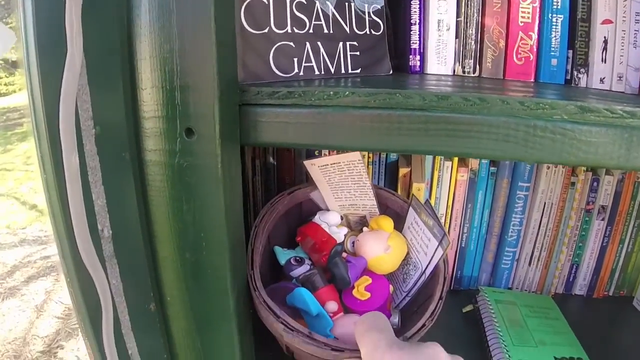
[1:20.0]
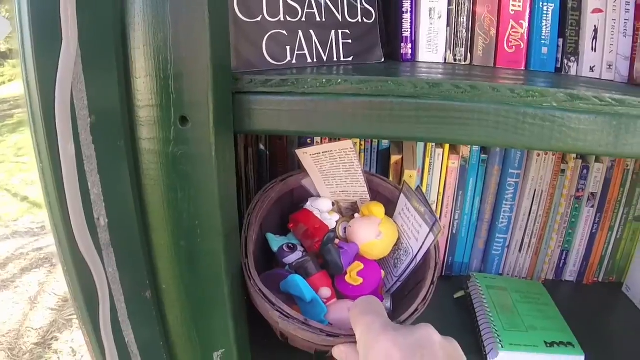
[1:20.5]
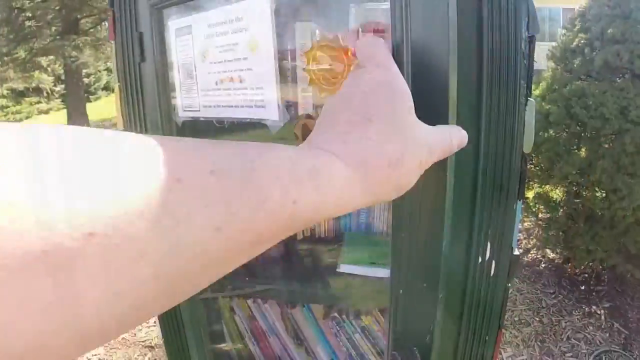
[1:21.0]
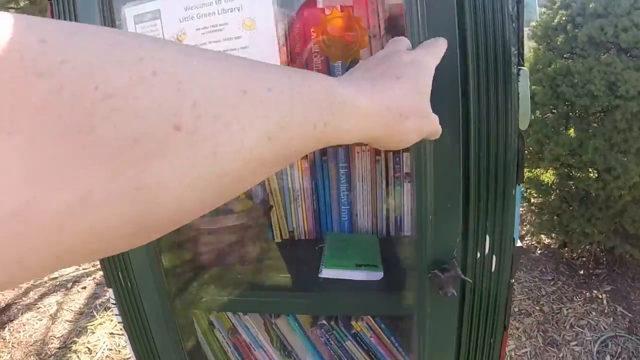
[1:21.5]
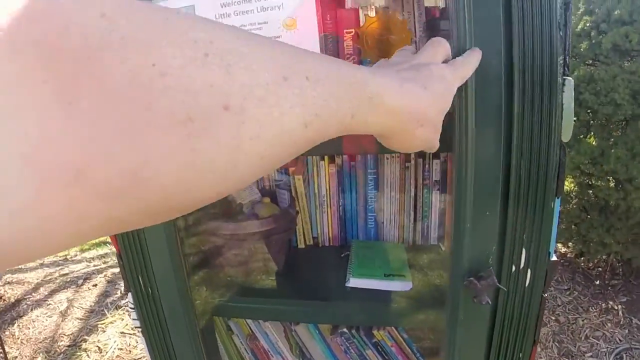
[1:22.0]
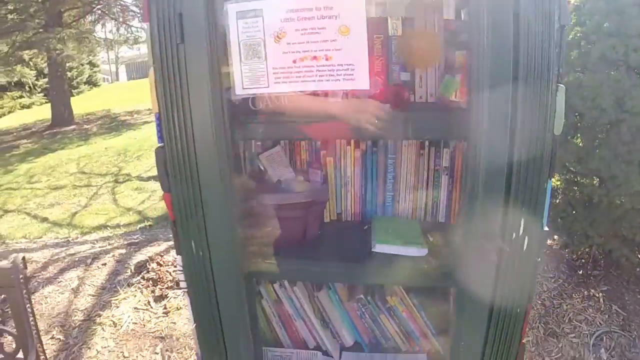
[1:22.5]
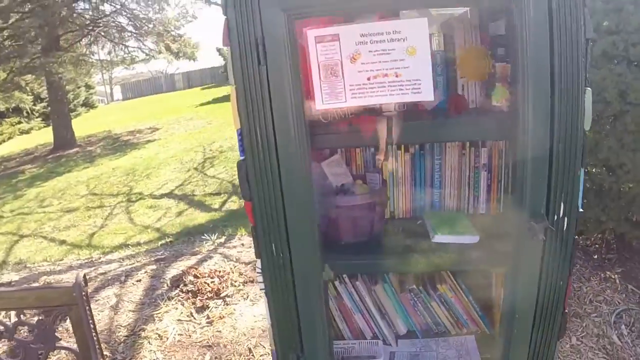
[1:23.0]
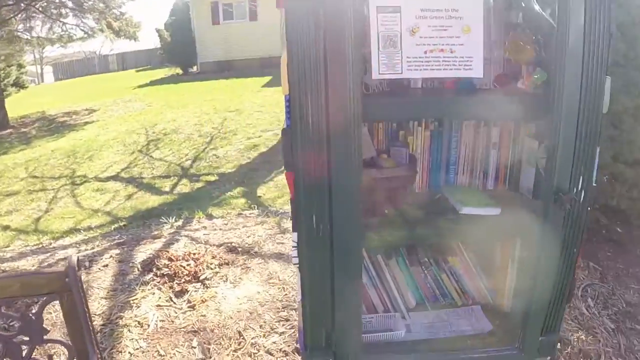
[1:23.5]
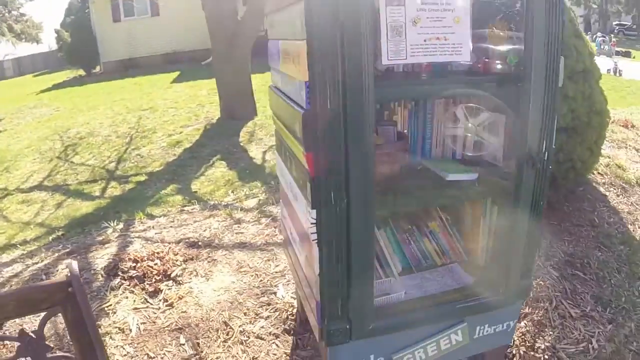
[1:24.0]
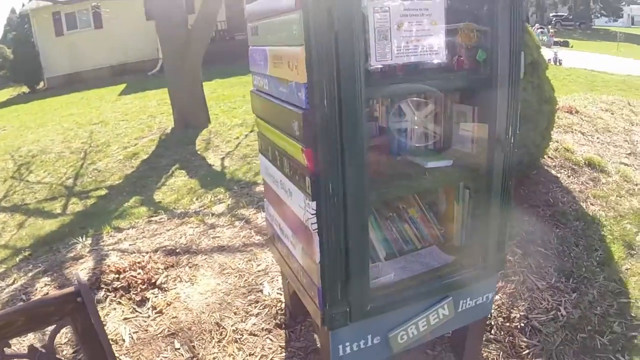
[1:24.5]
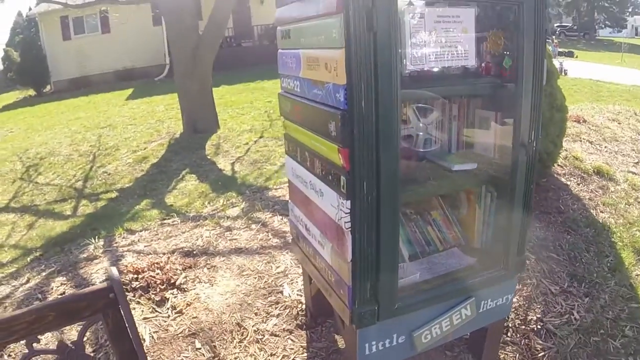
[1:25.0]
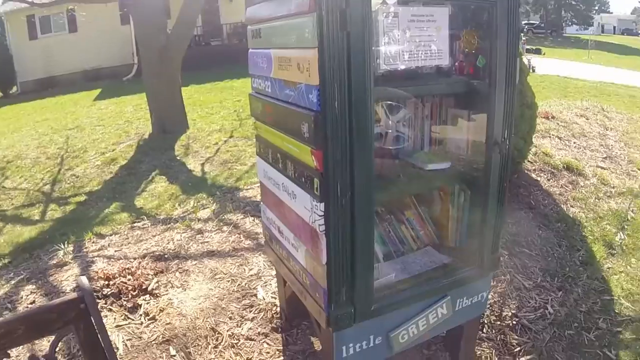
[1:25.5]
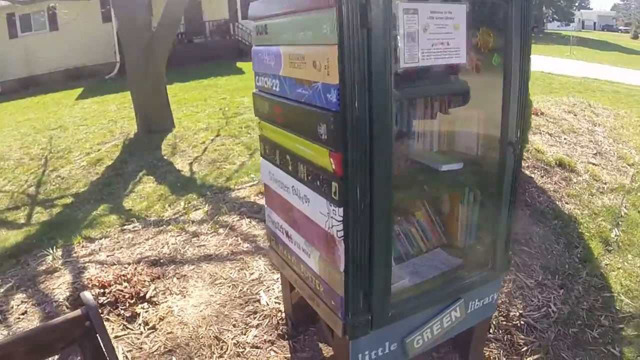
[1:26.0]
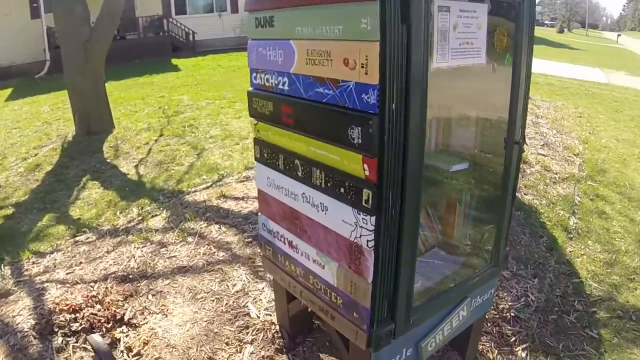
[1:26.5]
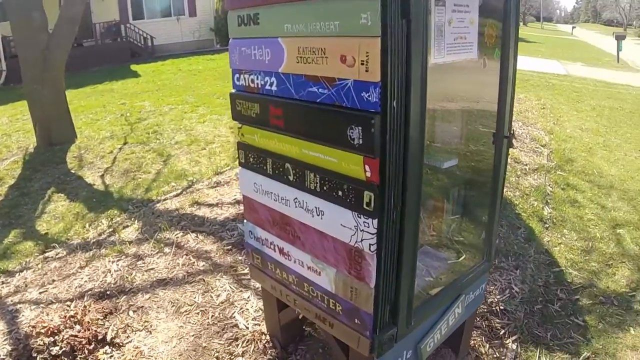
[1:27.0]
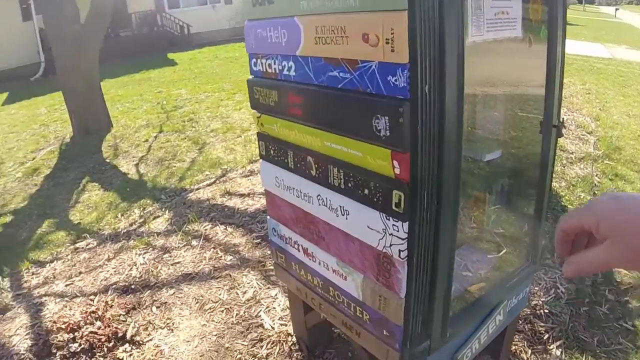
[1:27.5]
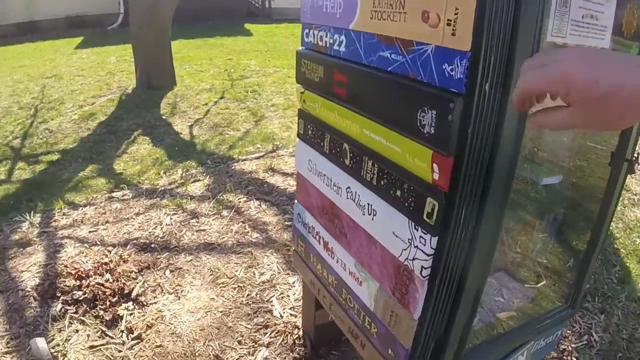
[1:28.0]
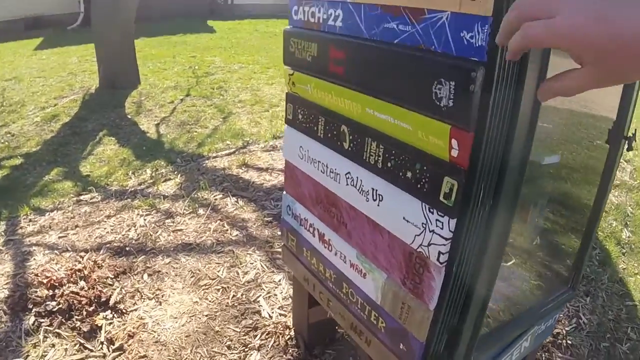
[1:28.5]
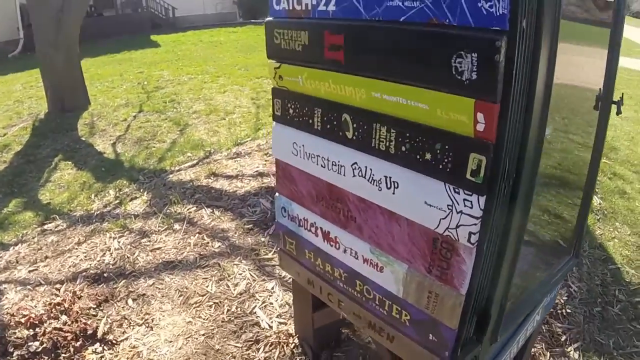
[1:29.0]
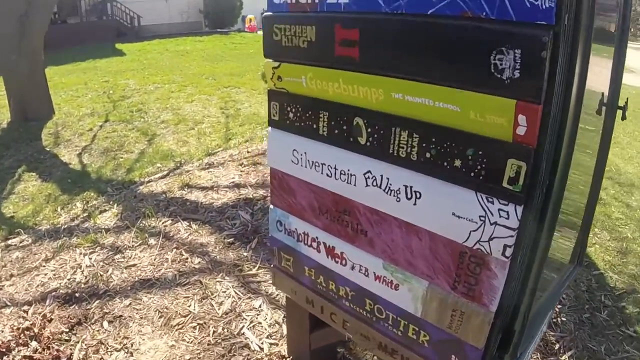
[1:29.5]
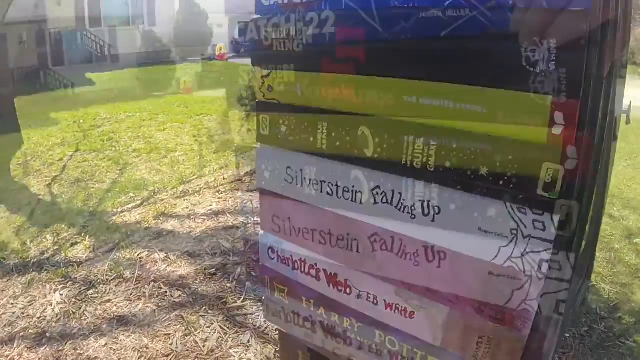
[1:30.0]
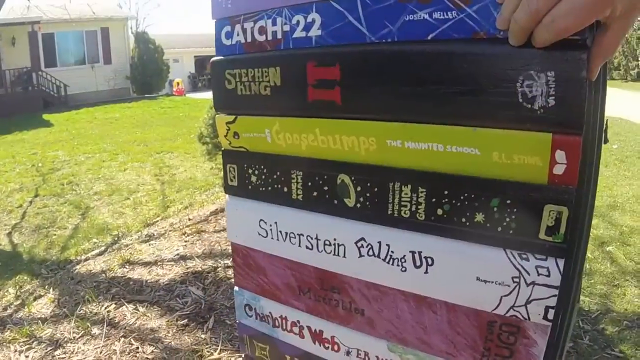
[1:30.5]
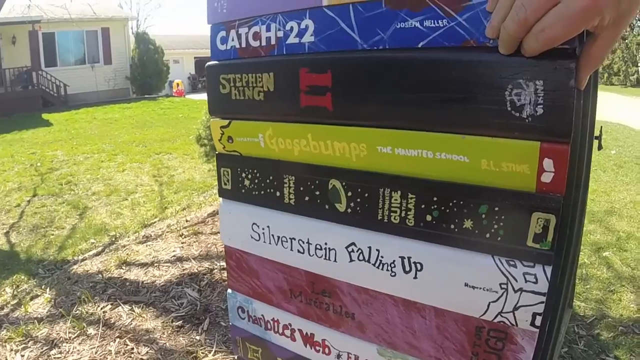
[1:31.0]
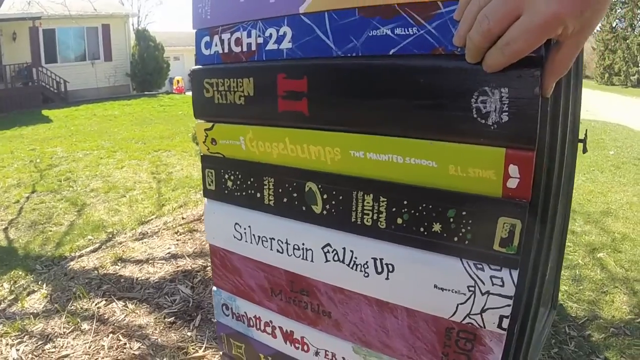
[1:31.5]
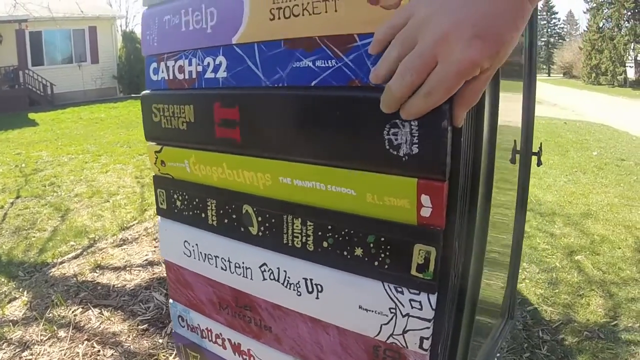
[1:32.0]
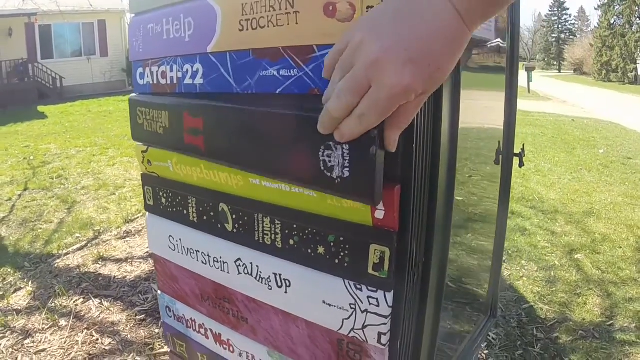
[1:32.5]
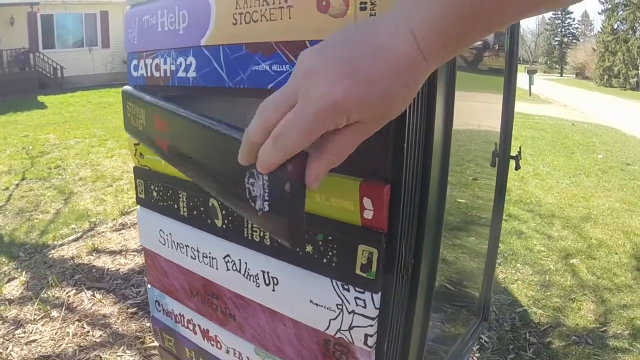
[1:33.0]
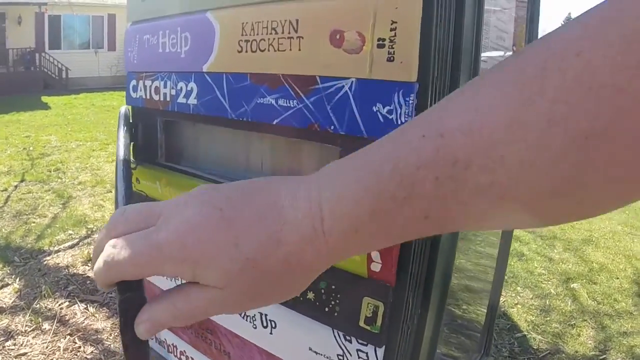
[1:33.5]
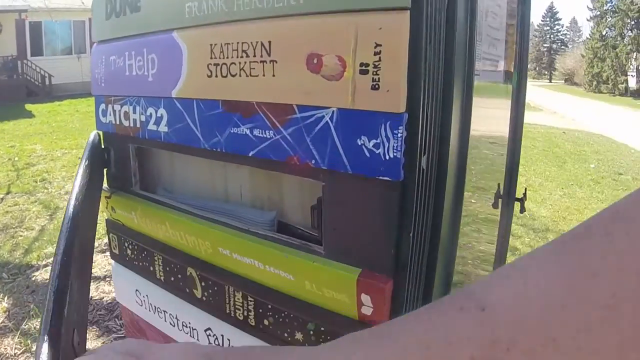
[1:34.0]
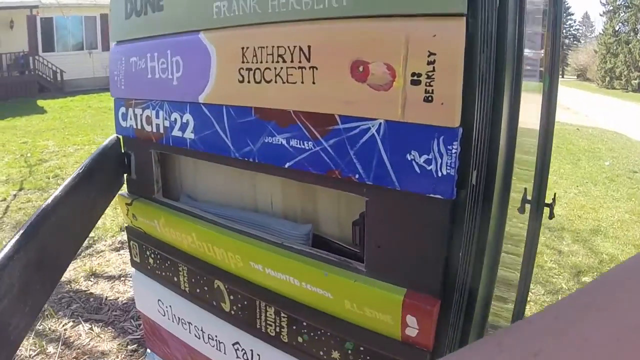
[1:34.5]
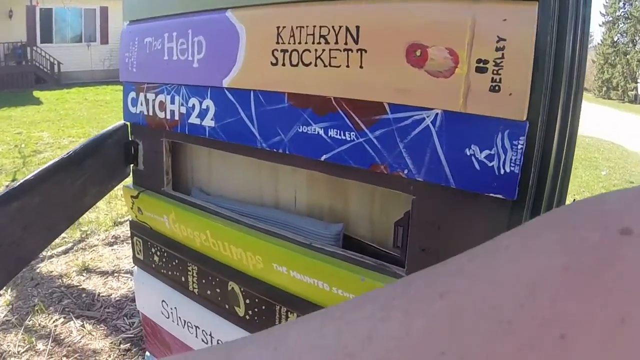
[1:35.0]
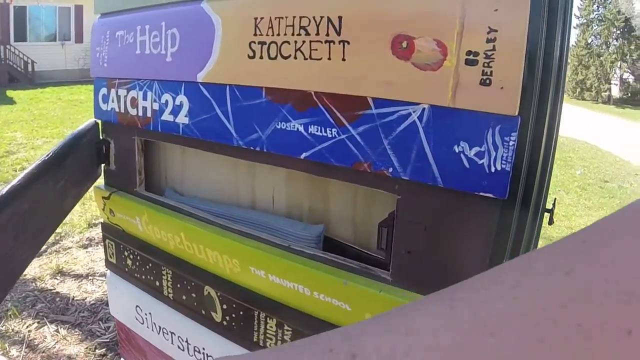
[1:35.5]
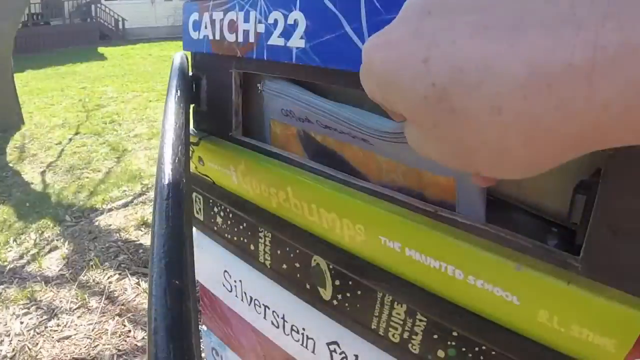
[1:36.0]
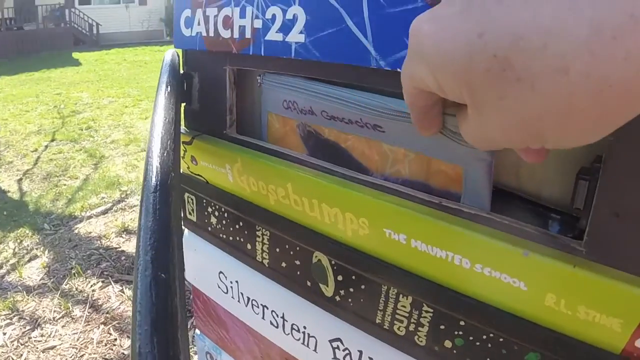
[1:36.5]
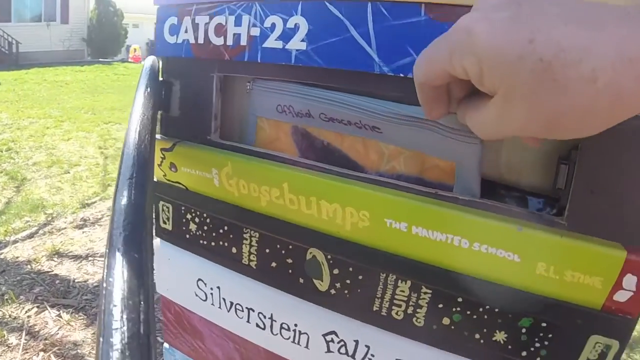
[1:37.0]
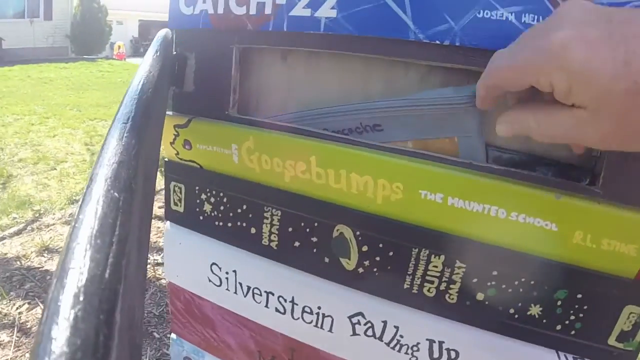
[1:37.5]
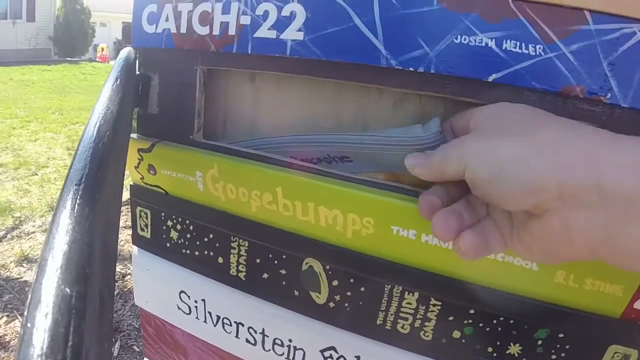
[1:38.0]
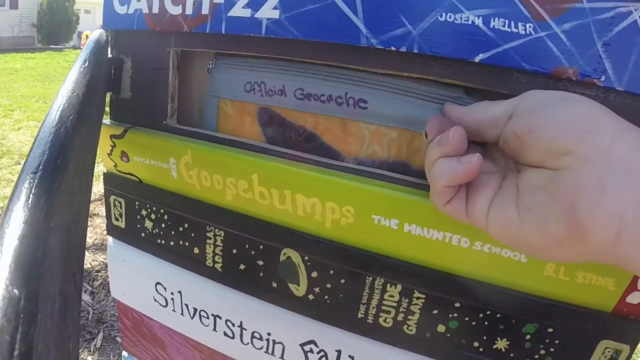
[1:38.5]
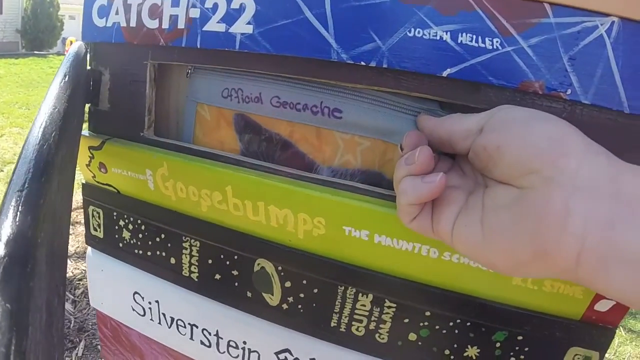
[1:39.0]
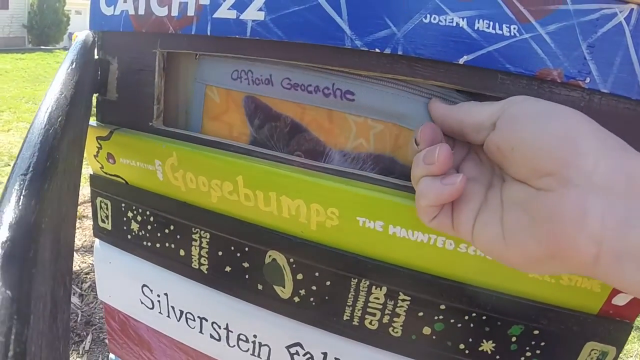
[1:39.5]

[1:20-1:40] He closes the book nook and the camera pans to its left side. The artwork on the side shows the spines of books stacked on each other like a bookshelf, but they are not real books; among them are a Stephen King book and a Goosebumps book. He pulls the Stephen King book image off to reveal what looks like a plastic envelope with a zipper behind it, a hidden spot where something can be left. The envelope says "official" followed by another word that is unclear.